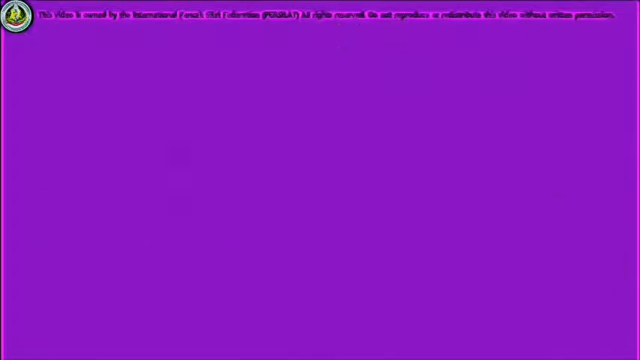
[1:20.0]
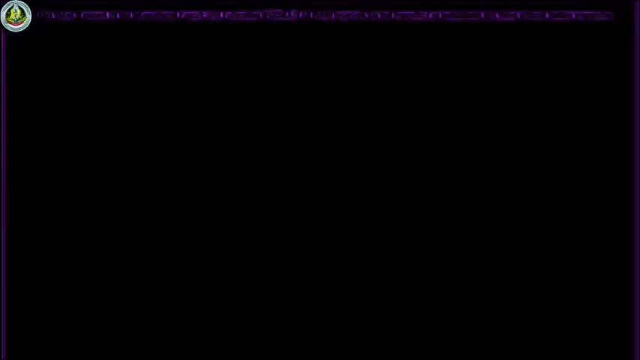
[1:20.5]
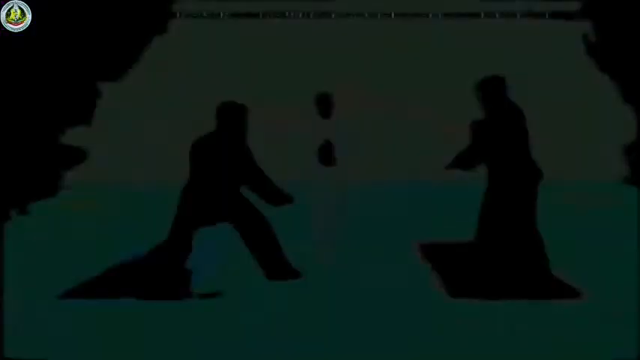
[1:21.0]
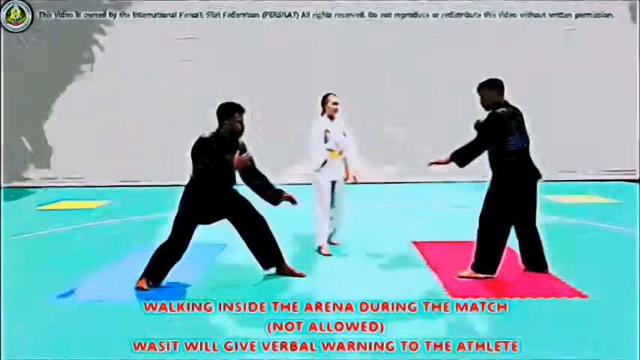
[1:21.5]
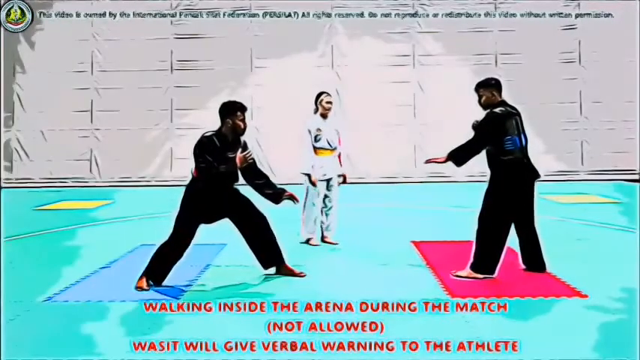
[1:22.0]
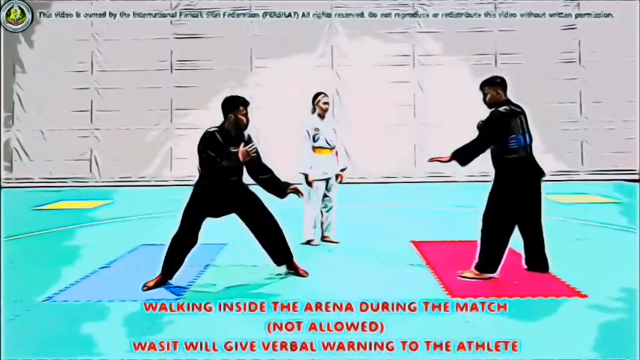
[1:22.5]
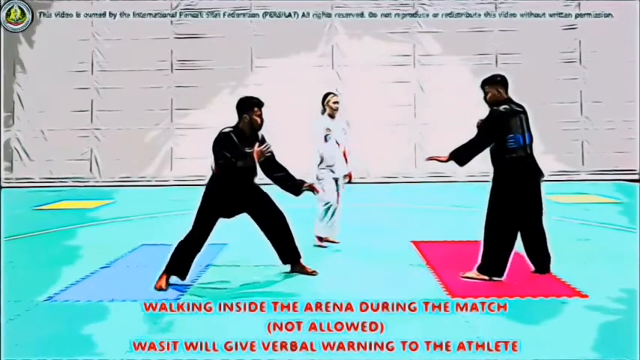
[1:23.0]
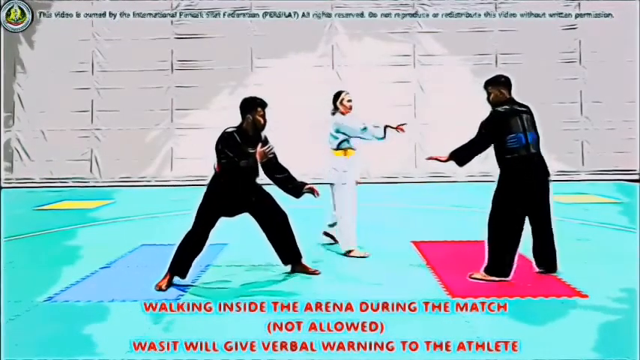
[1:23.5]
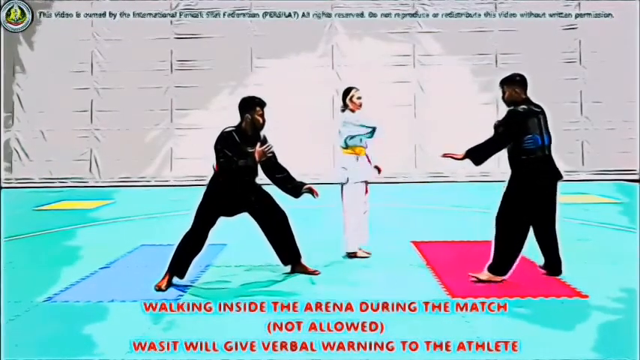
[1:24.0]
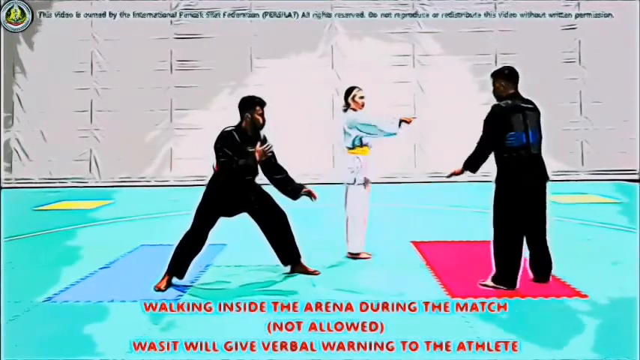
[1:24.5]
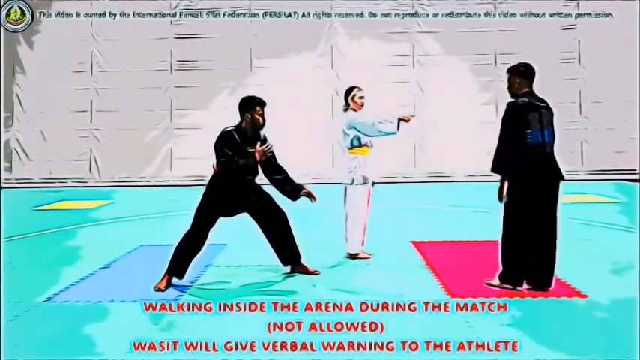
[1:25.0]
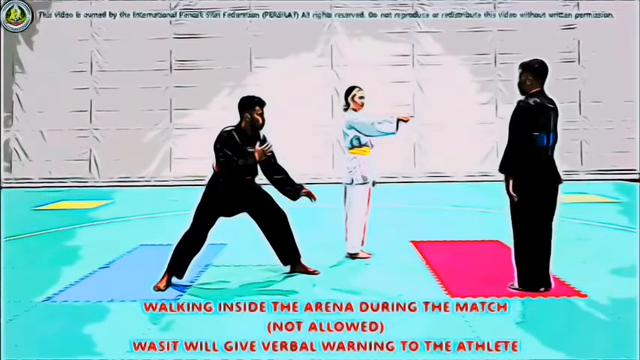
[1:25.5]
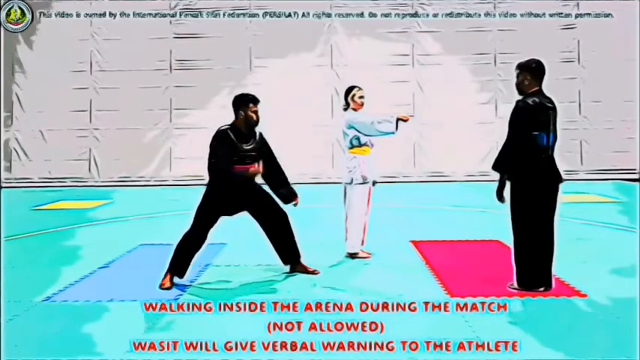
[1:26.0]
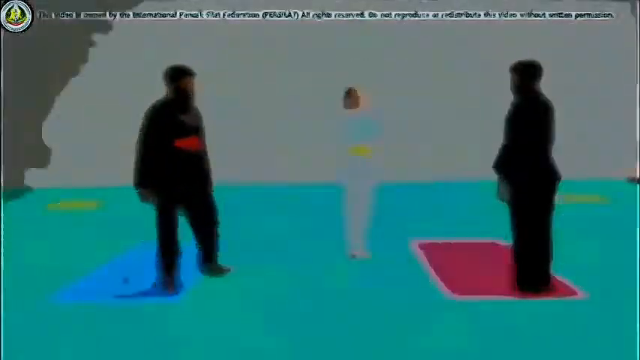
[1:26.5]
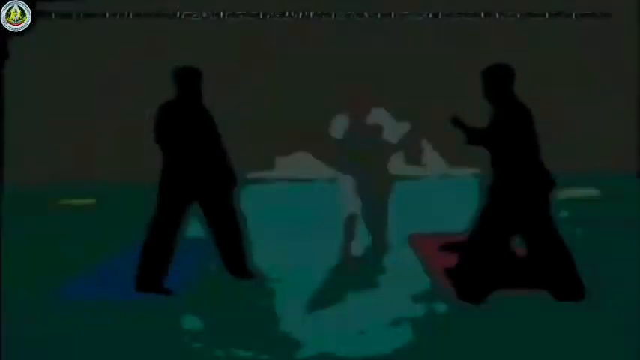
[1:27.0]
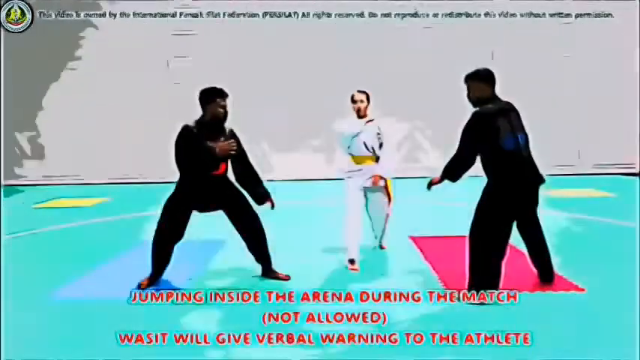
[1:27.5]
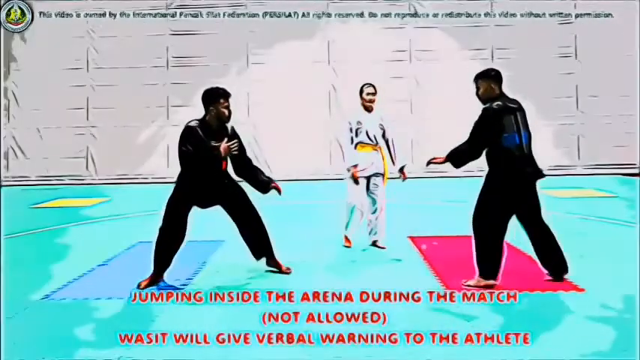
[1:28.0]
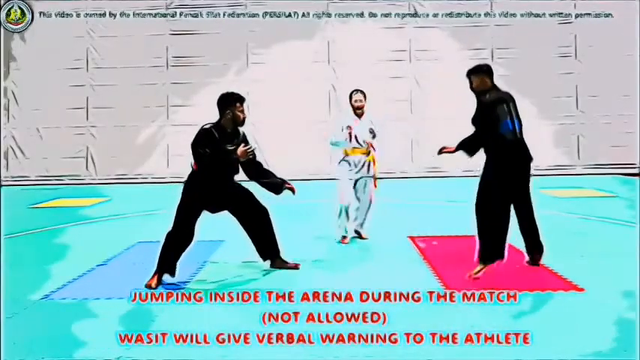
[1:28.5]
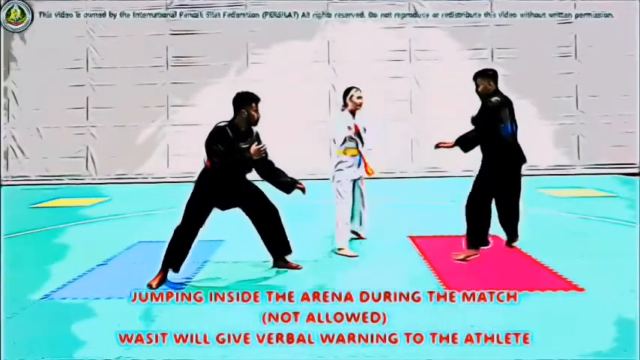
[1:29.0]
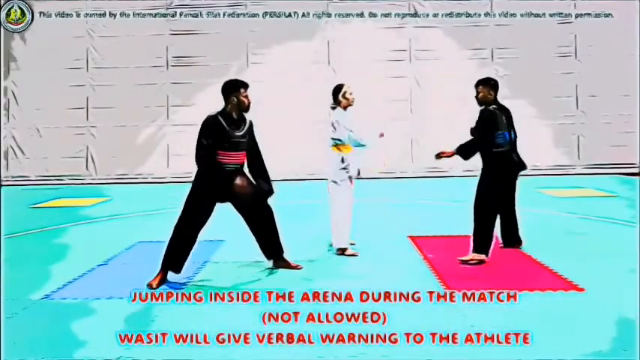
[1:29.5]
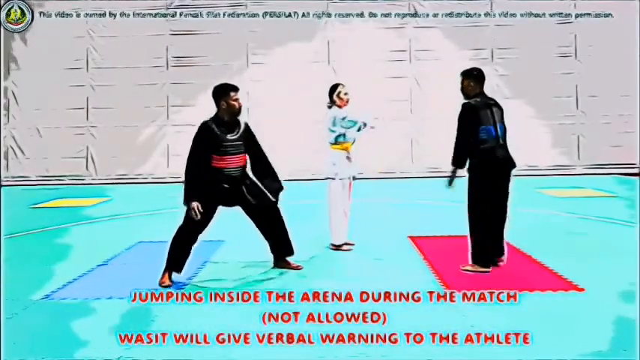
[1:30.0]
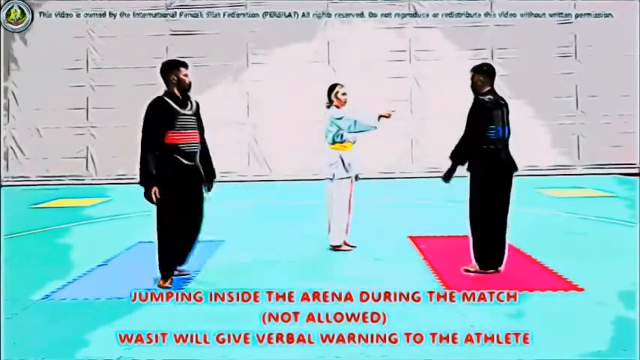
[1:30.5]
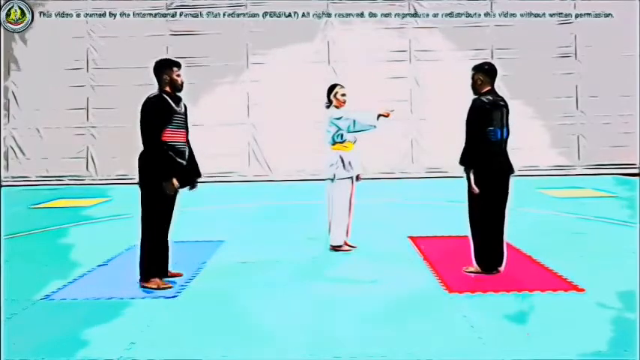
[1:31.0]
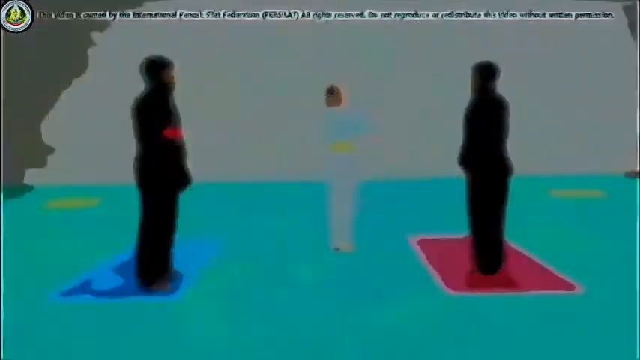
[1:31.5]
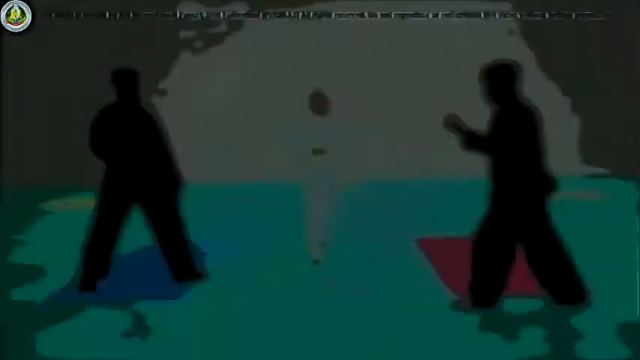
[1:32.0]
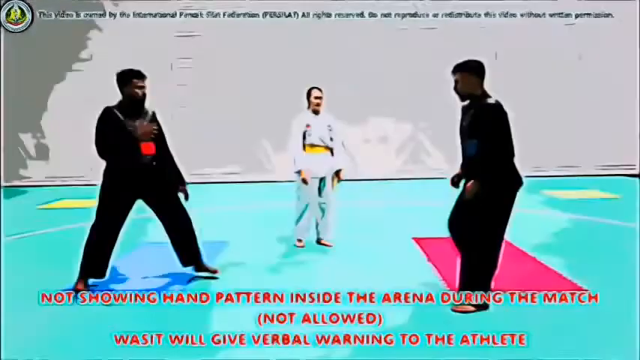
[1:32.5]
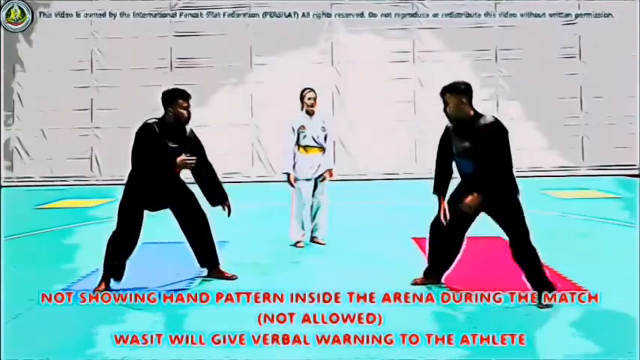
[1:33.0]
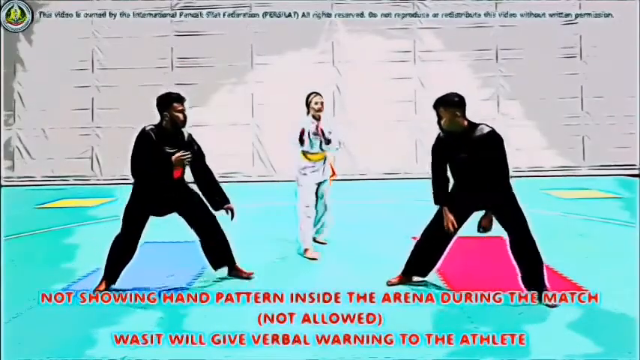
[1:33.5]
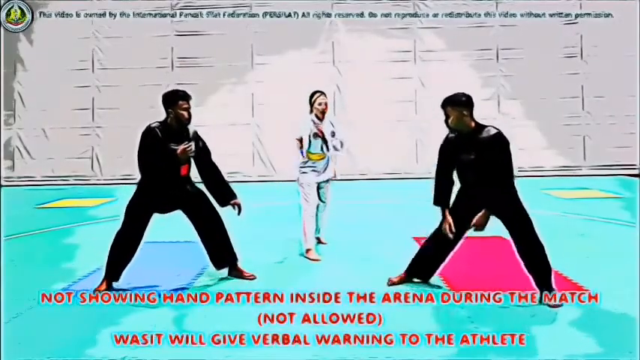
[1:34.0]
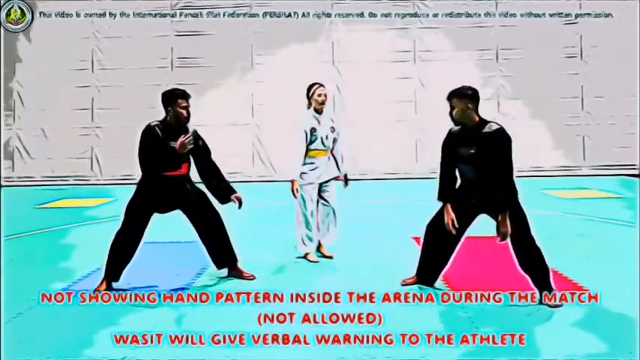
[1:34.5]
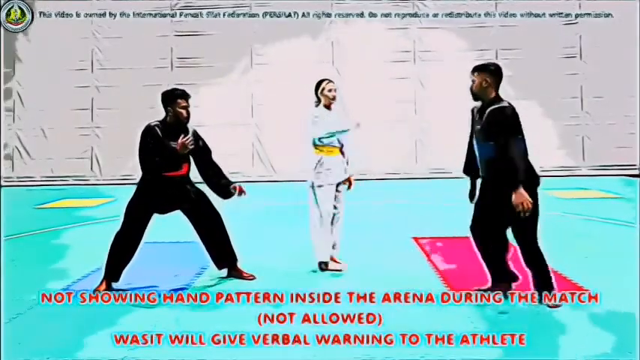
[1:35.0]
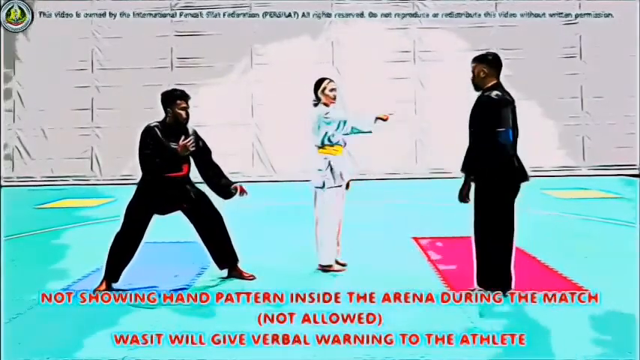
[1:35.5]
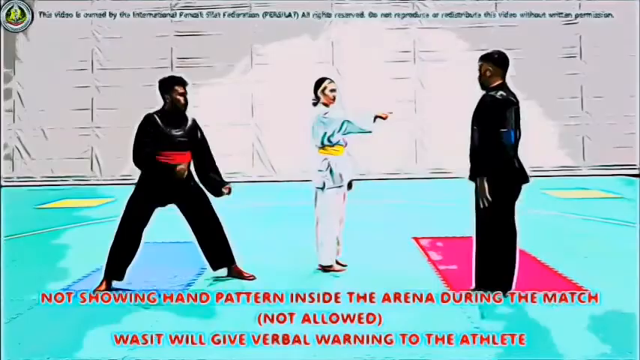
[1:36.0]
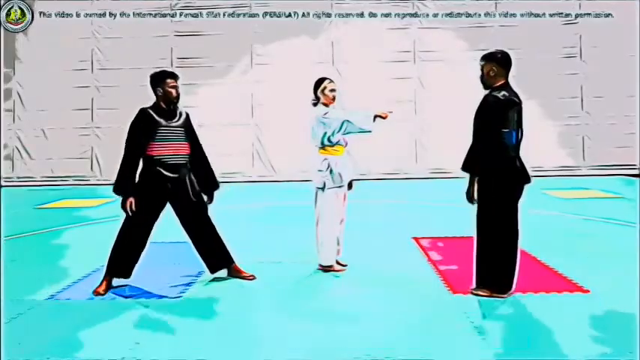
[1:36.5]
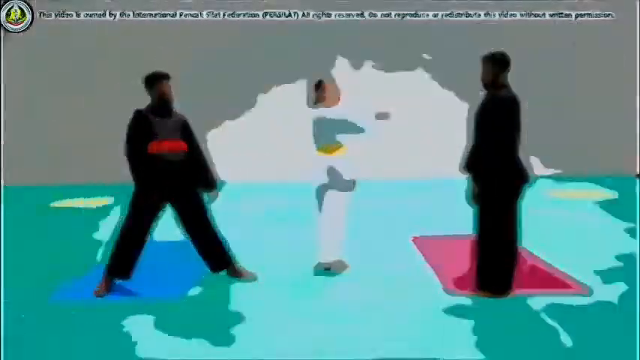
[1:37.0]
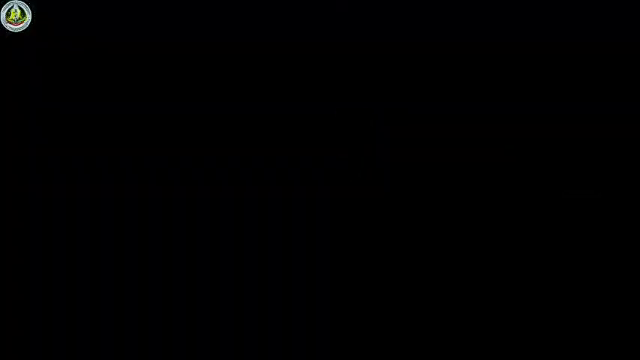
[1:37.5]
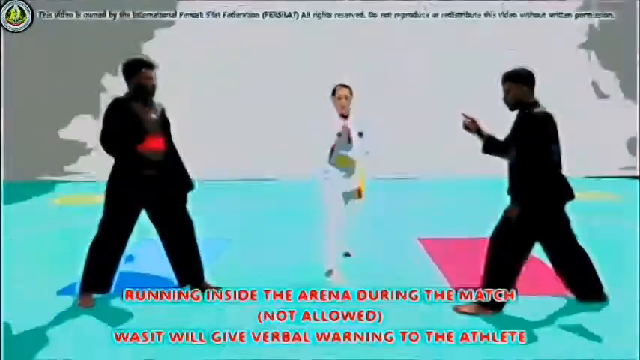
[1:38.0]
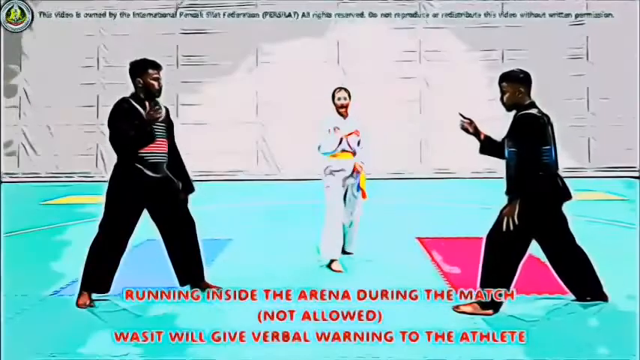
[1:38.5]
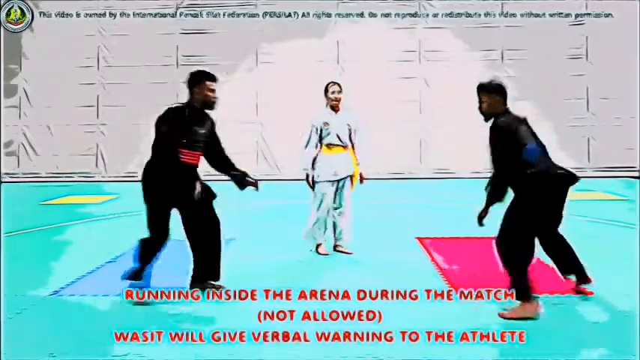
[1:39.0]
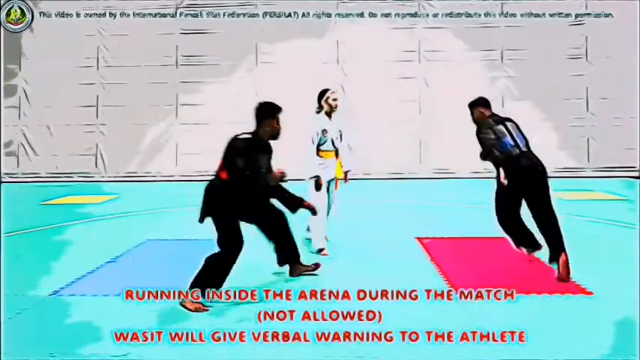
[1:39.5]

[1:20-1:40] Text reads "walking inside the arena during the match, not allowed" and states that the Wossett will give a verbal warning. The Wossett, apparently the referee, wears a white uniform with a gold belt or waist strap. One athlete wears a black uniform with a red belt, and the other apparently wears a white uniform with a blue belt. One of the athletes is running around. The athlete with the red belt is standing on a blue mat, and the athlete with the blue belt is standing on a red mat.